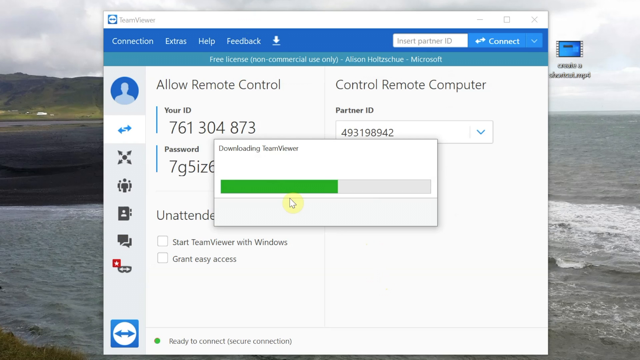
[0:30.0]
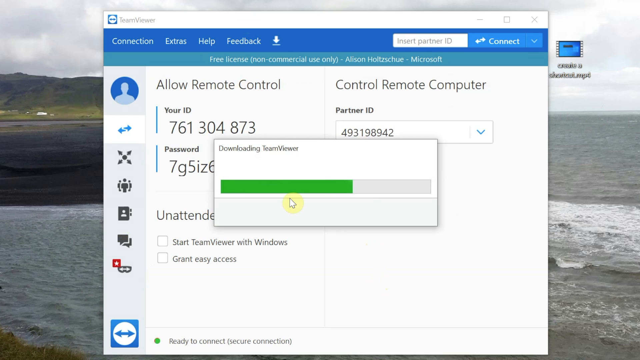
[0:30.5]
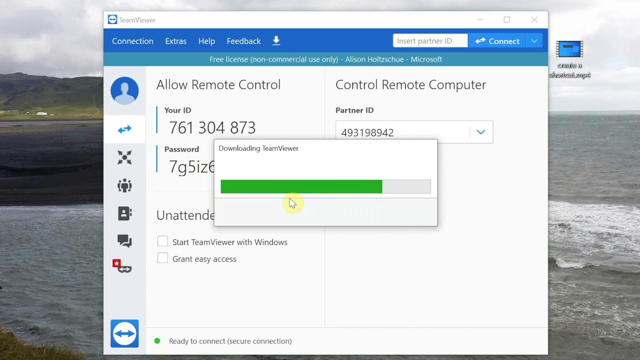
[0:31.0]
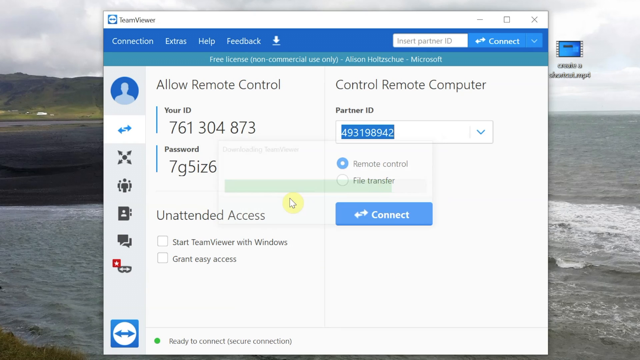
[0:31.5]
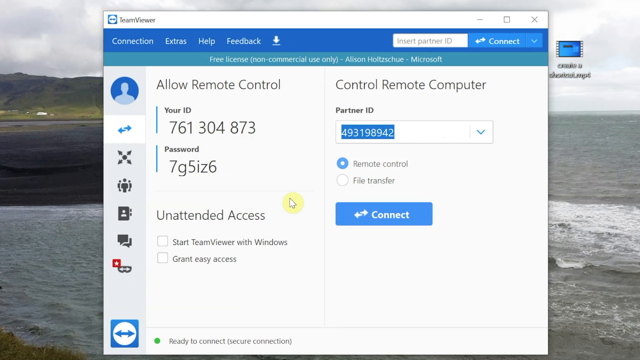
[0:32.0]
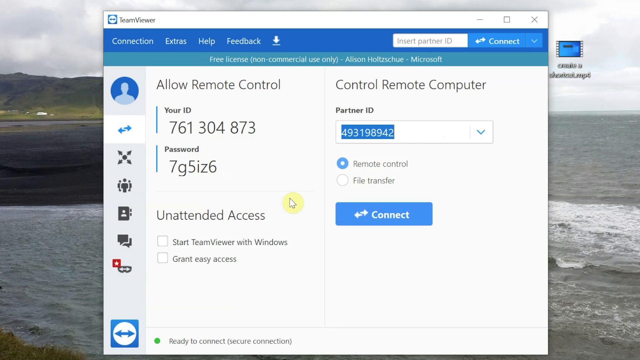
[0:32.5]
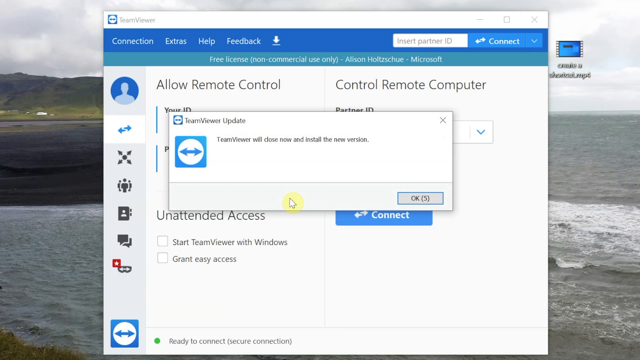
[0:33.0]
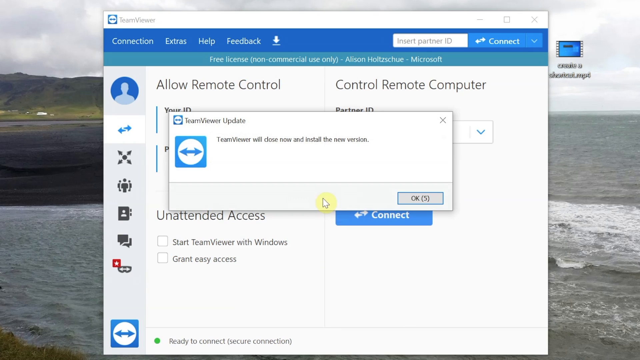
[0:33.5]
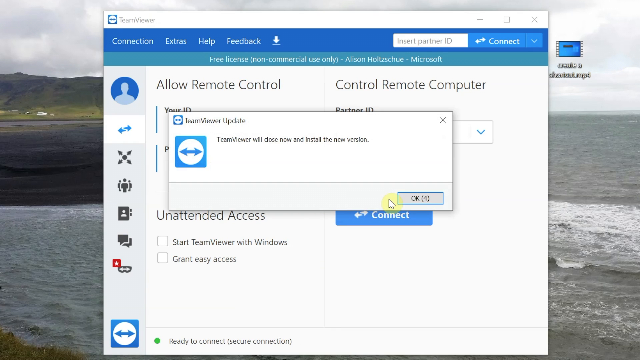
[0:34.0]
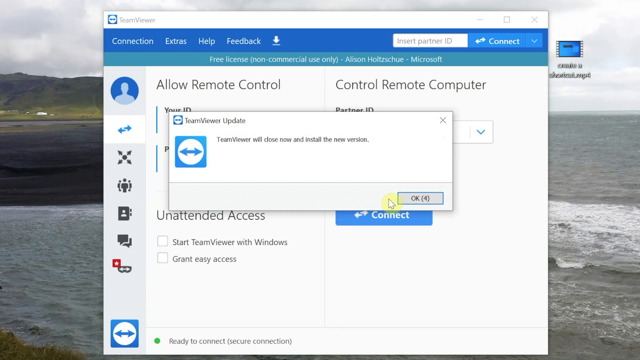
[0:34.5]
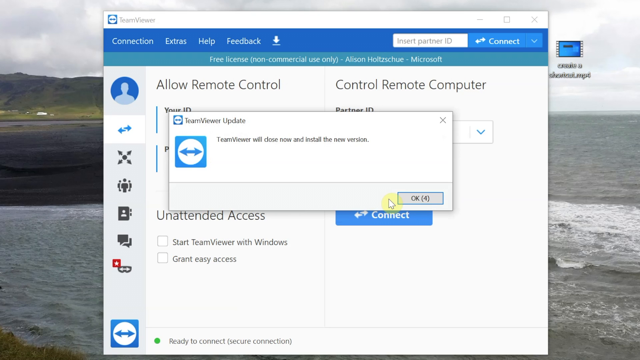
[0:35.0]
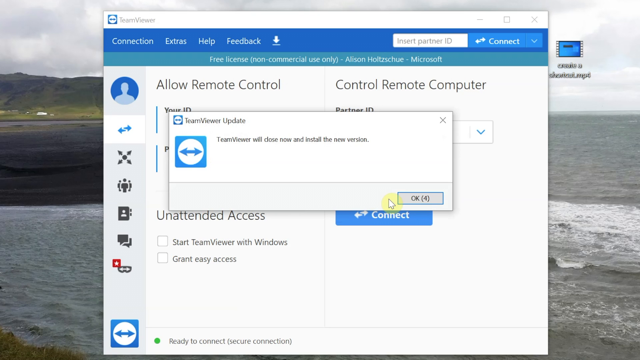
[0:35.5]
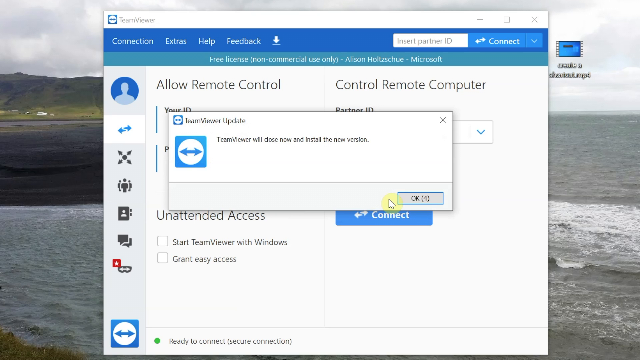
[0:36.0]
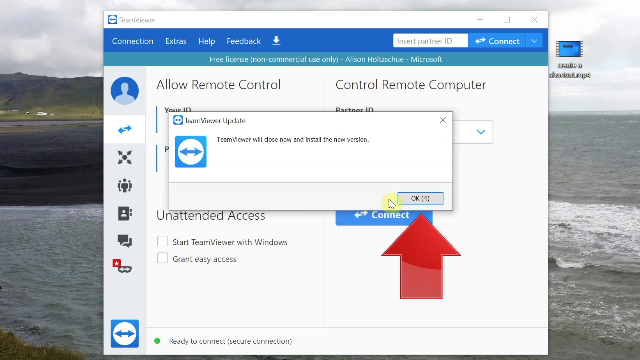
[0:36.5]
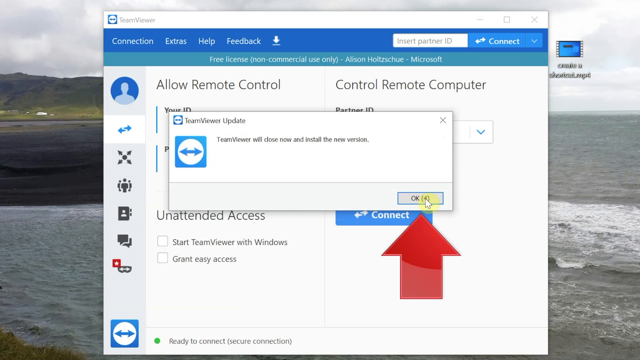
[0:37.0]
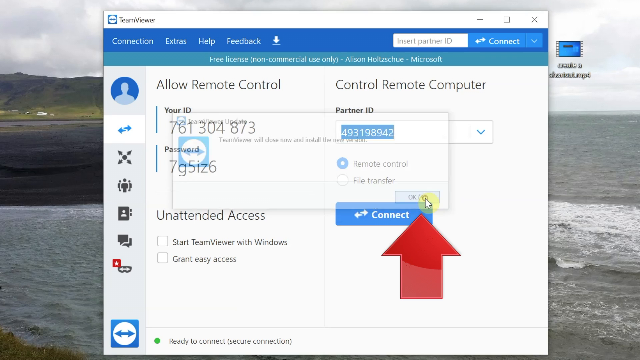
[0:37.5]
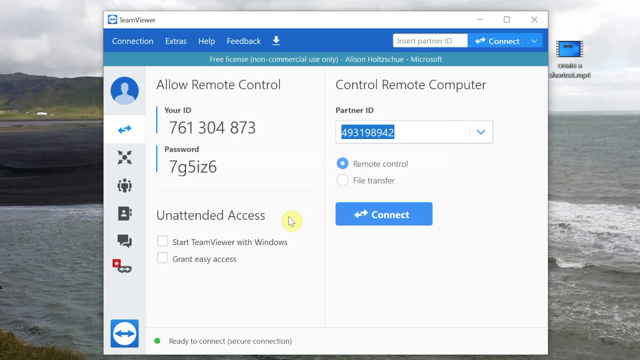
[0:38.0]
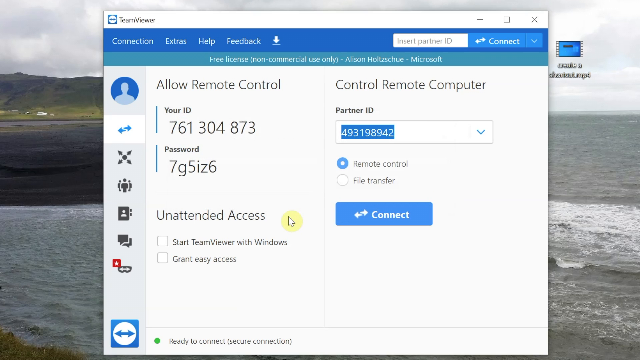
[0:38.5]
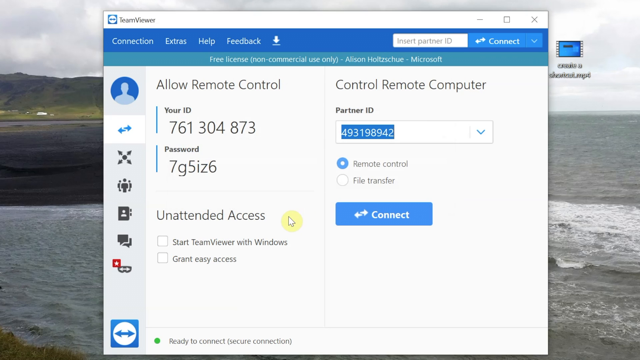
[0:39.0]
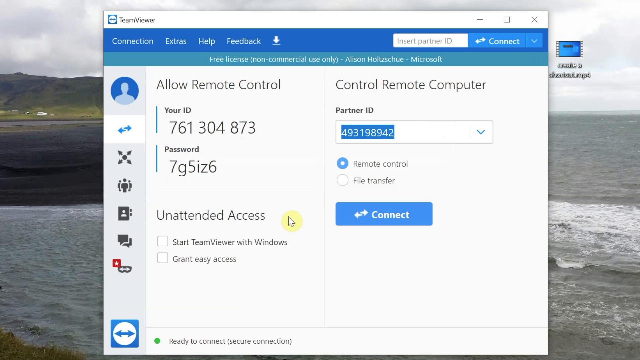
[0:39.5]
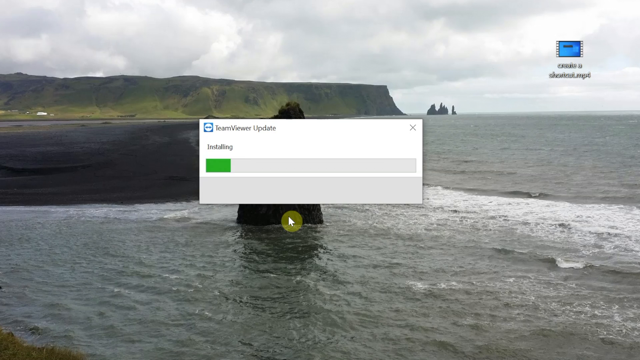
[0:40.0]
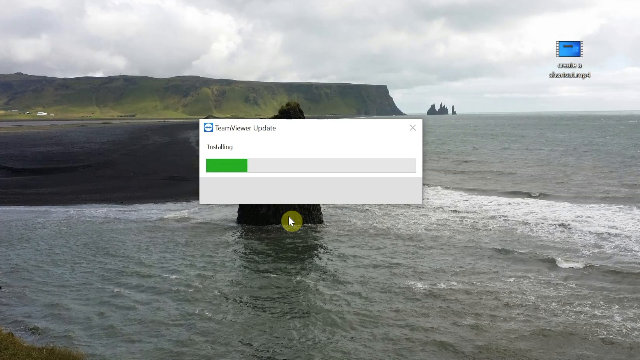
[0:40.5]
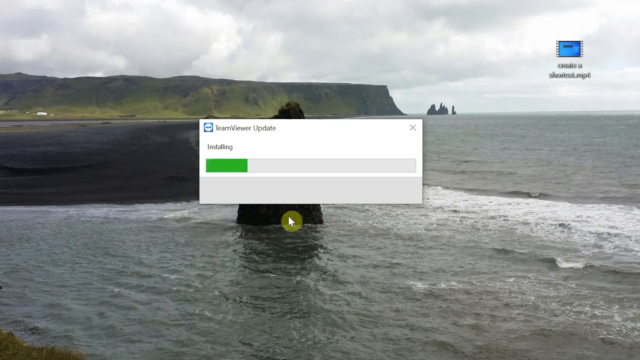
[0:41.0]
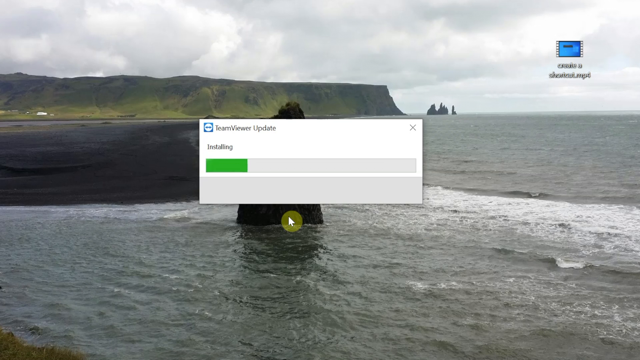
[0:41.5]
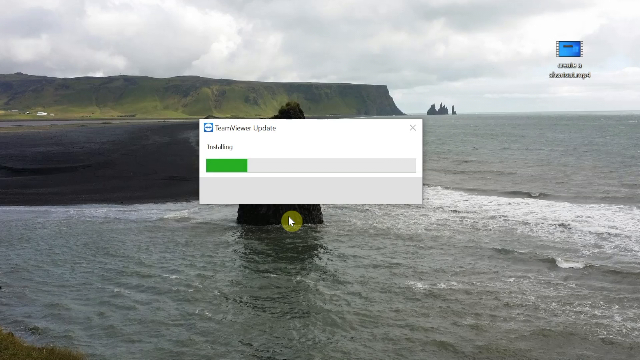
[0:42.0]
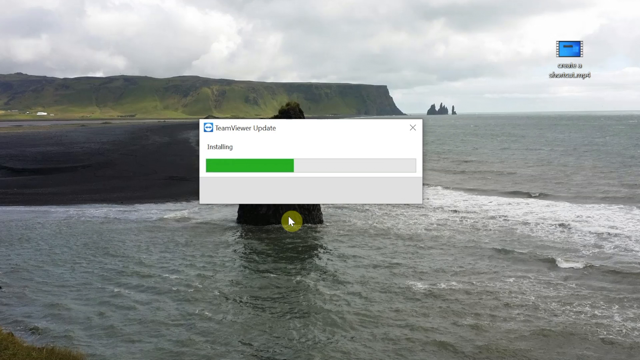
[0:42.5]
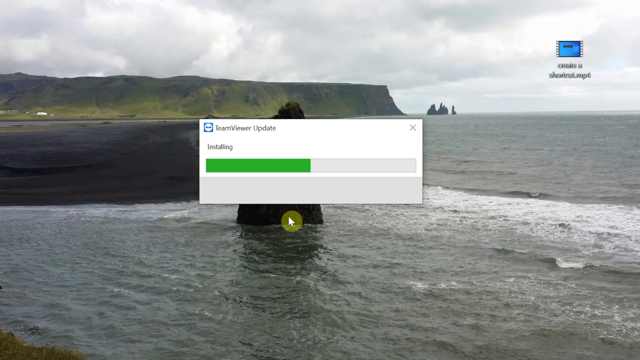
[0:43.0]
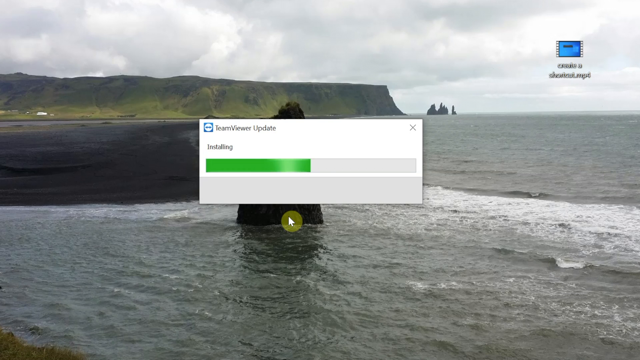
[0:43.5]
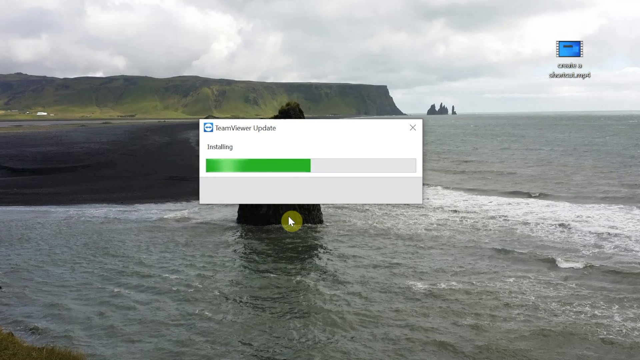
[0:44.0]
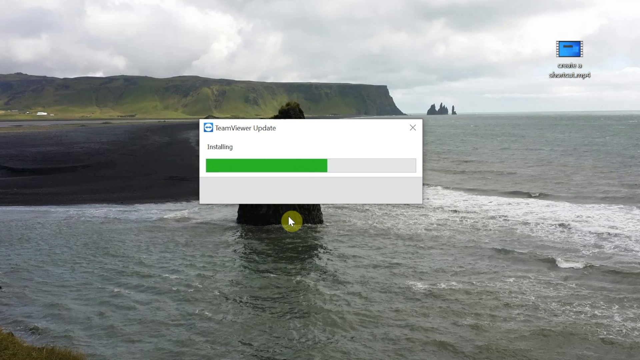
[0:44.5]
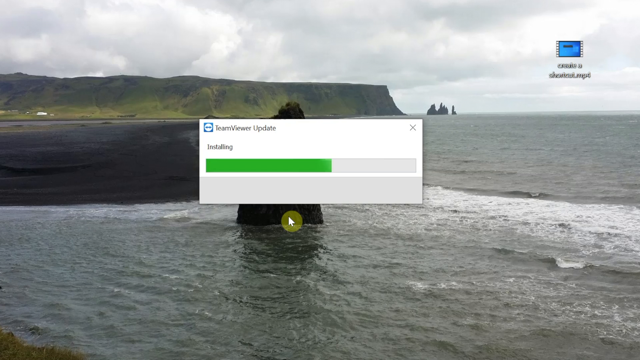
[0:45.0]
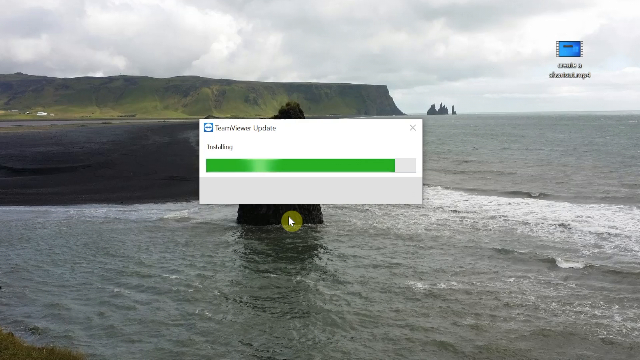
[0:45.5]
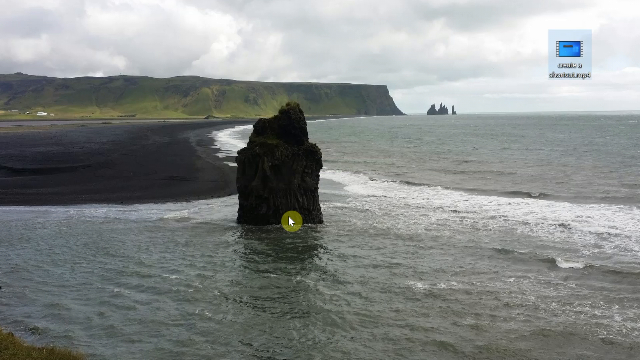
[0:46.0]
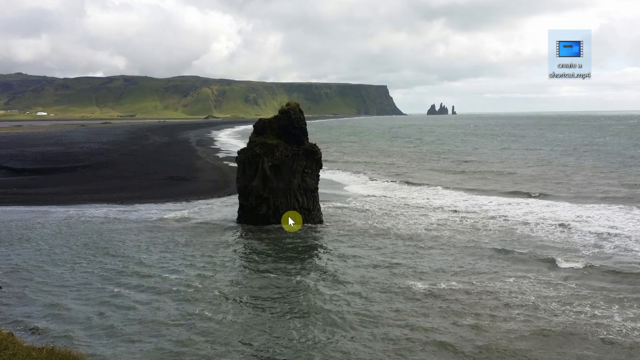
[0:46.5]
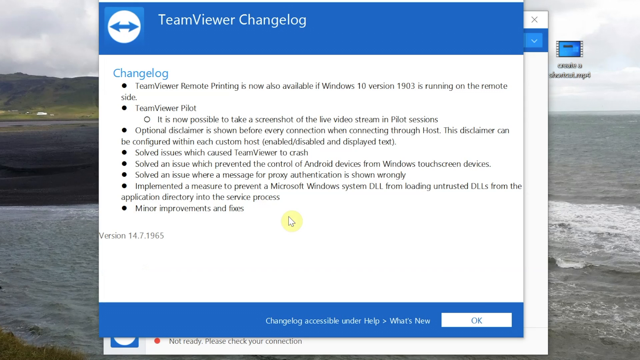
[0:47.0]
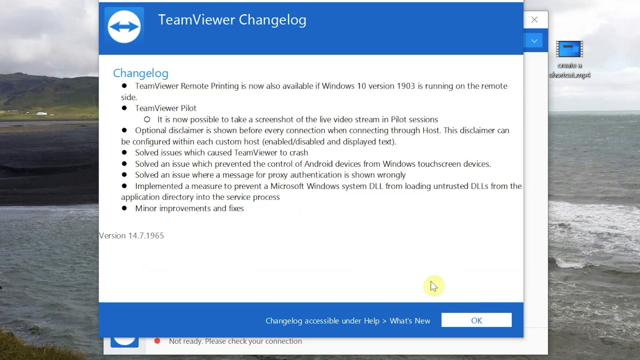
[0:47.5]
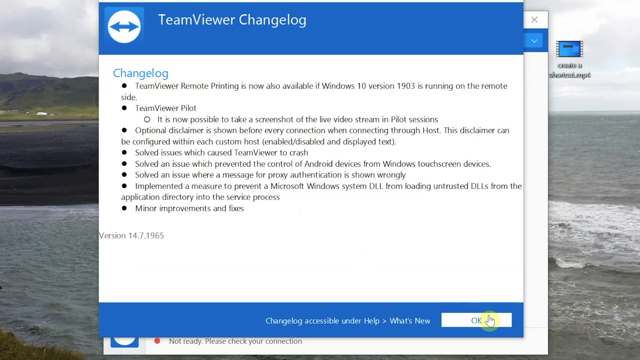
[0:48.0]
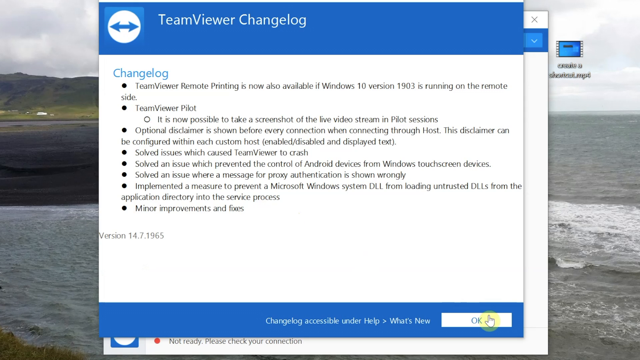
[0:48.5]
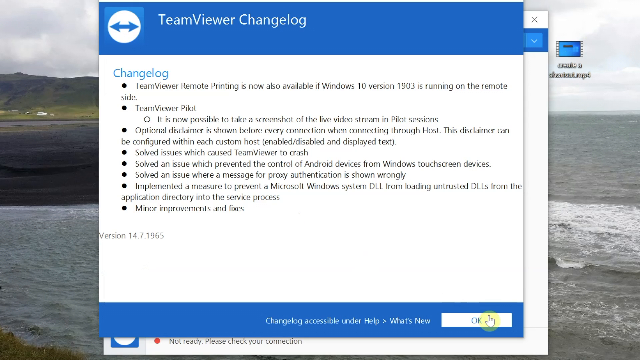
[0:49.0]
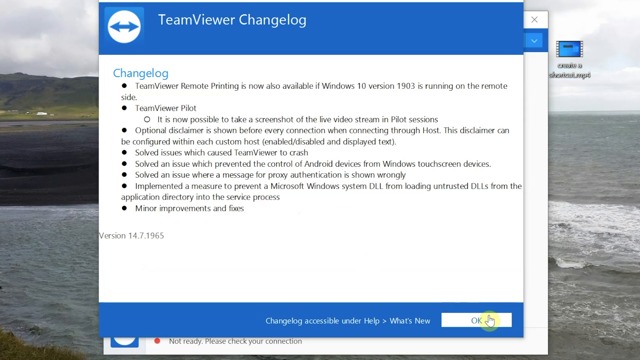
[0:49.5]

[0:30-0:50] The green bar goes from left to right and disappears when it finishes. The partner ID is highlighted in blue, and a window pops up that says "TeamViewer will close now and install the new version." A big fat red arrow points to the OK button, which is outlined in blue, and the cursor hovers over to it and clicks it. The screen shifts to just the screensaver and a window that says "team viewer update" and "installing". Its green bar starts at about a quarter of the bar, then flashes and expands as it uploads until it completes. A screen then pops up that says "team viewer change log" with bullet points. Another big red arrow points down to the bottom right corner, which says "OK", and the cursor clicks on OK.